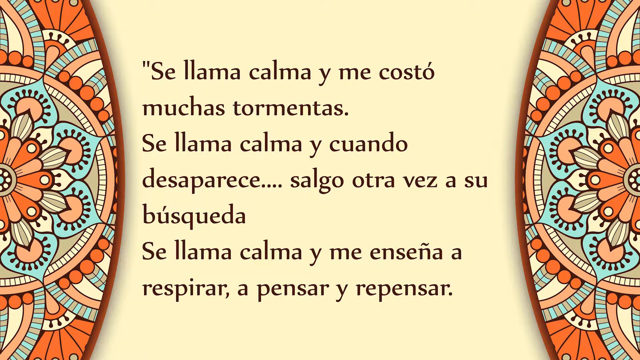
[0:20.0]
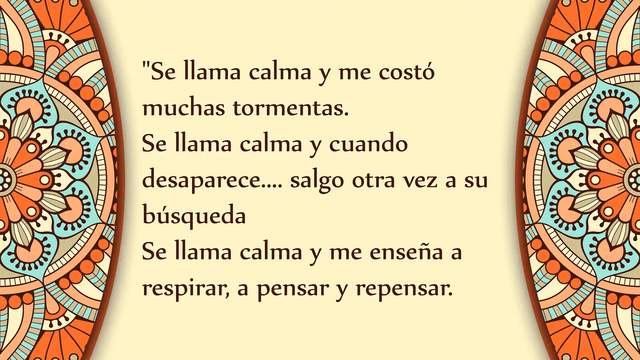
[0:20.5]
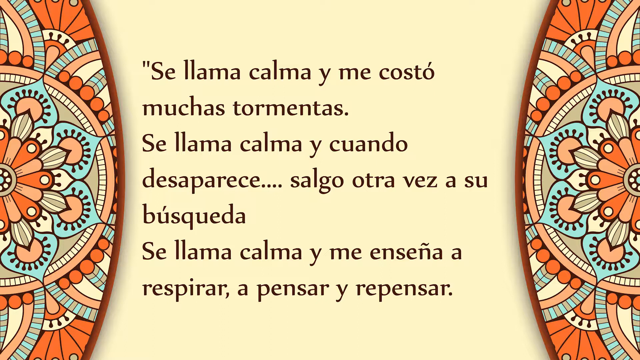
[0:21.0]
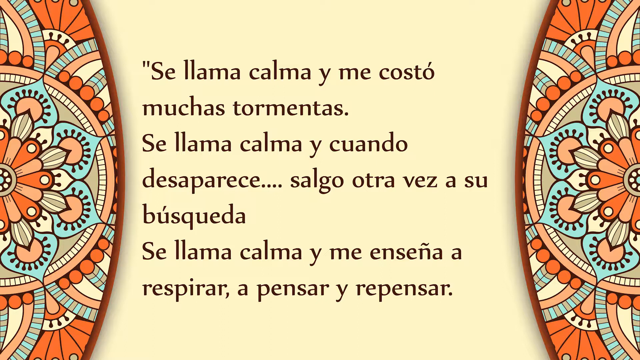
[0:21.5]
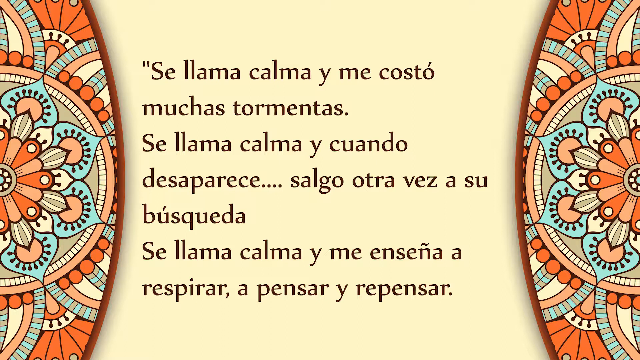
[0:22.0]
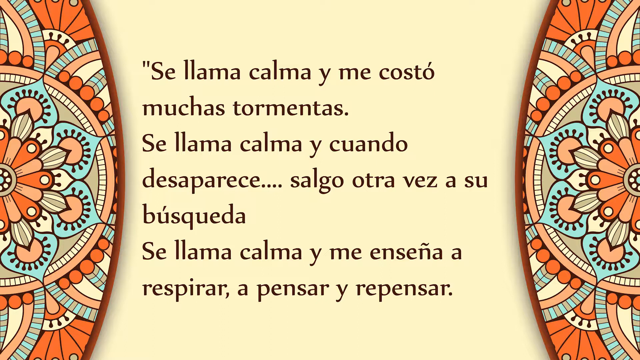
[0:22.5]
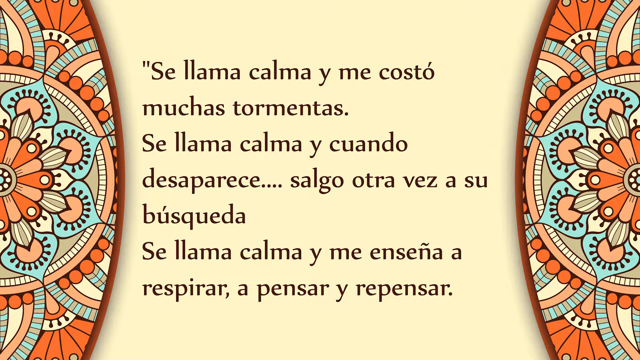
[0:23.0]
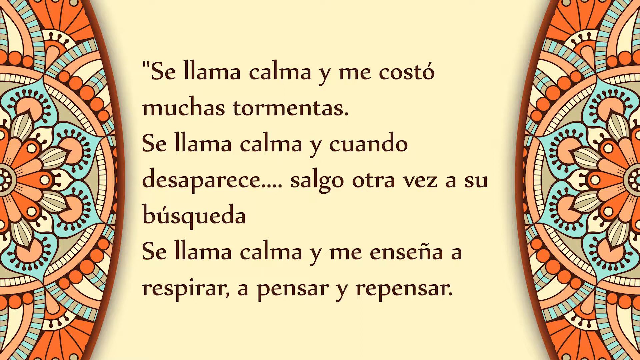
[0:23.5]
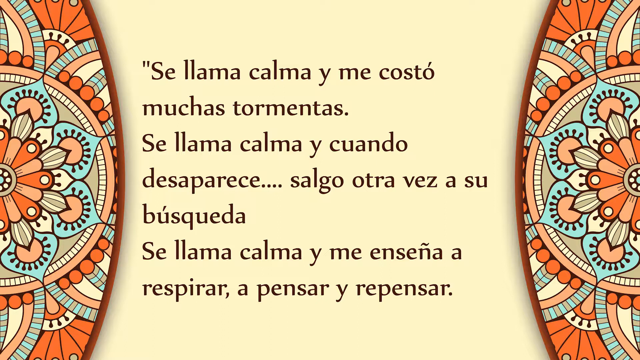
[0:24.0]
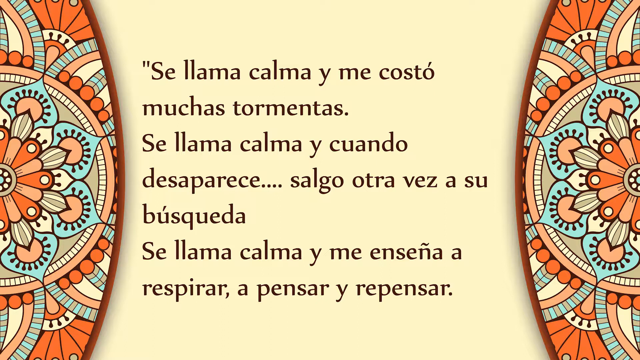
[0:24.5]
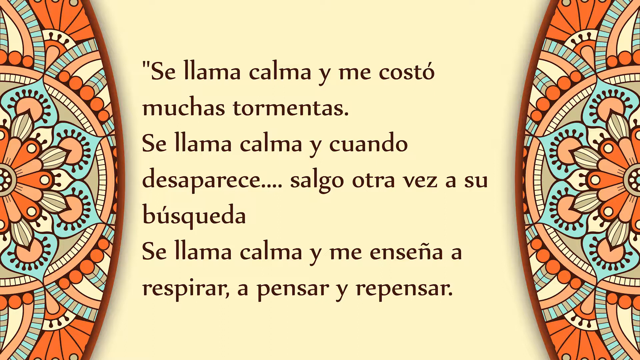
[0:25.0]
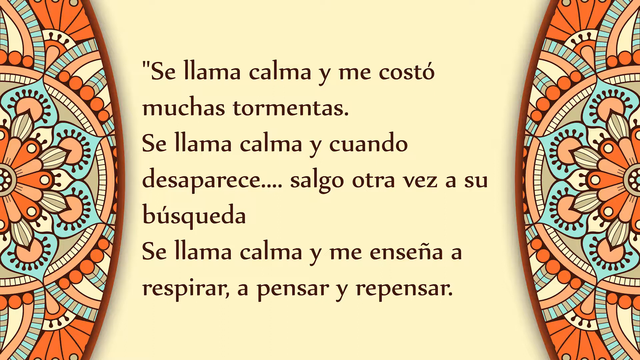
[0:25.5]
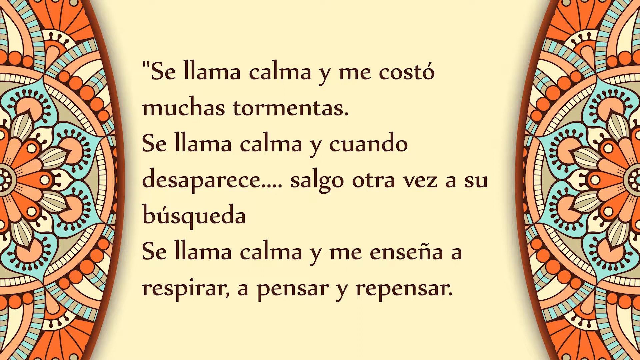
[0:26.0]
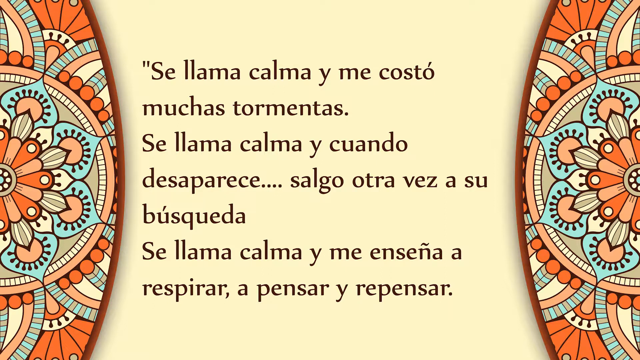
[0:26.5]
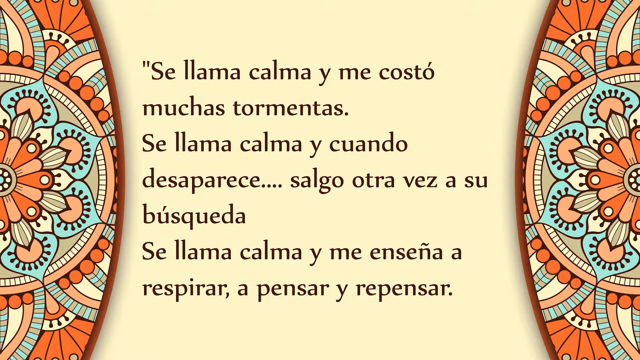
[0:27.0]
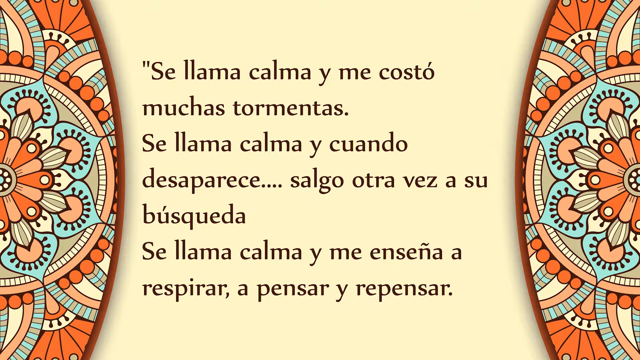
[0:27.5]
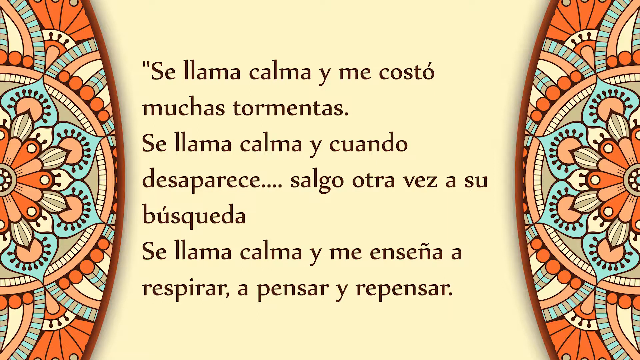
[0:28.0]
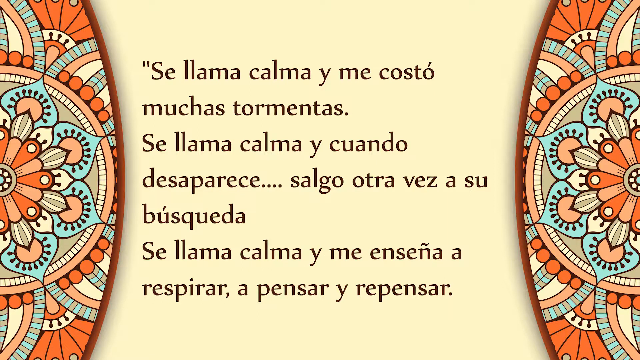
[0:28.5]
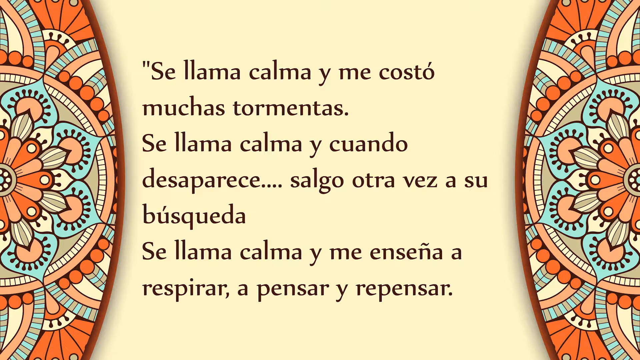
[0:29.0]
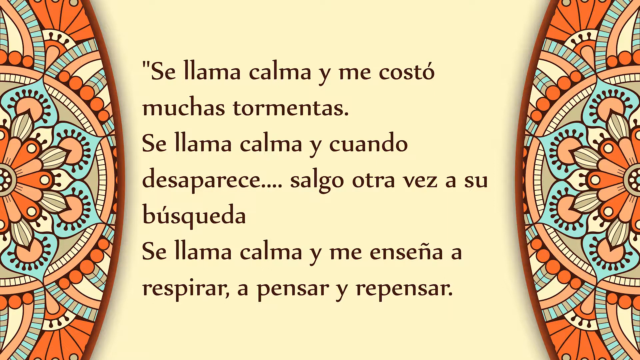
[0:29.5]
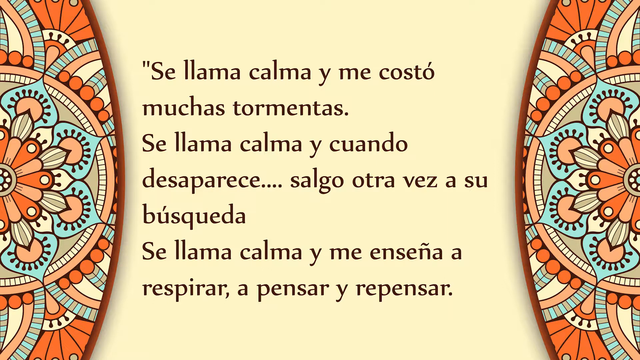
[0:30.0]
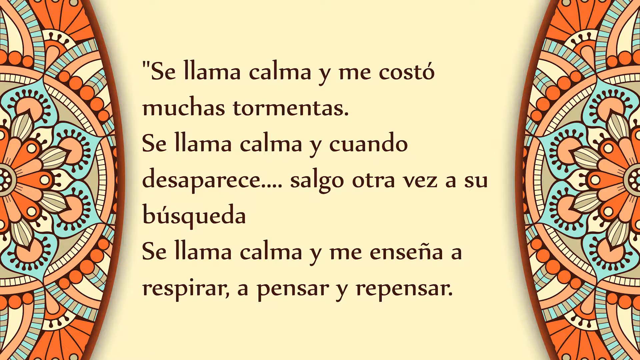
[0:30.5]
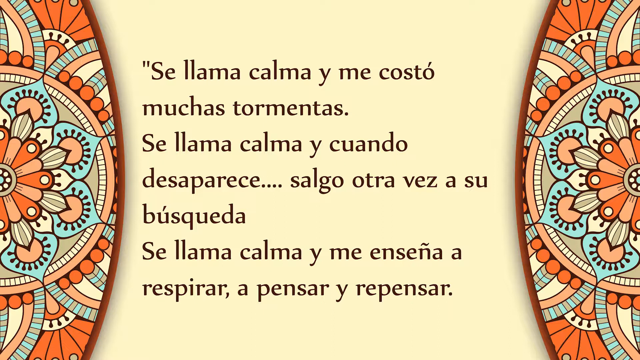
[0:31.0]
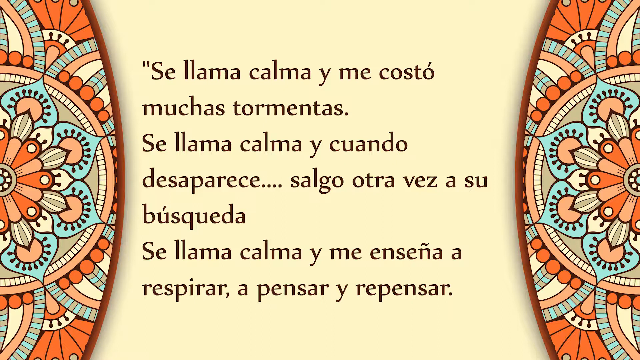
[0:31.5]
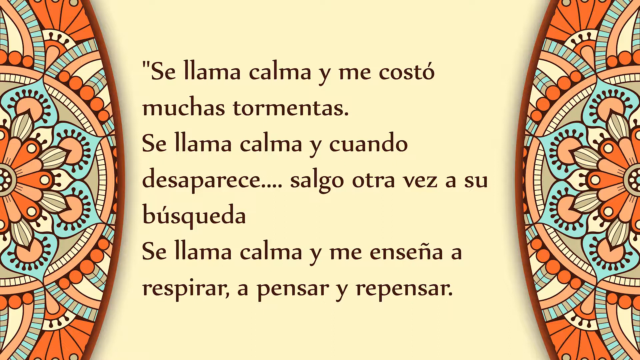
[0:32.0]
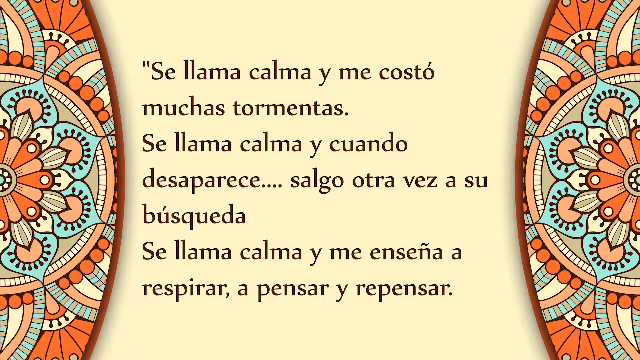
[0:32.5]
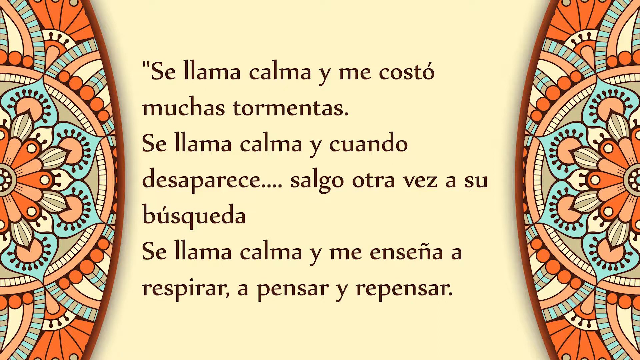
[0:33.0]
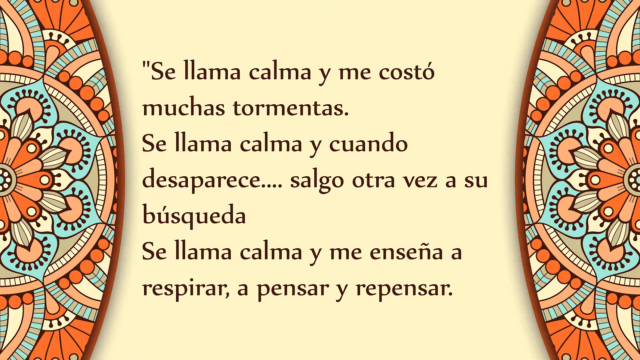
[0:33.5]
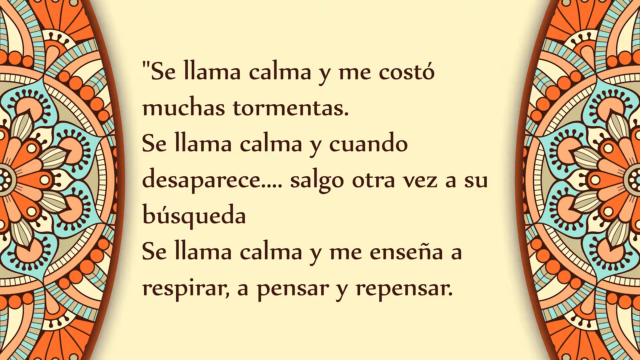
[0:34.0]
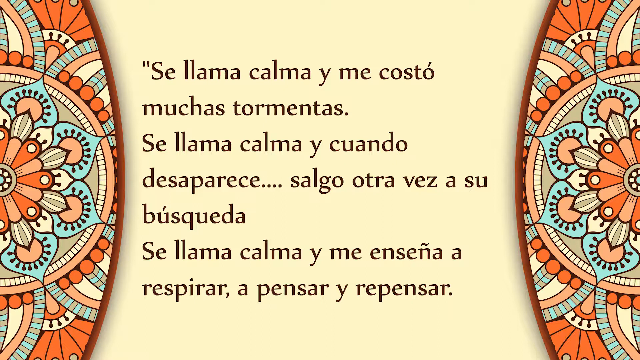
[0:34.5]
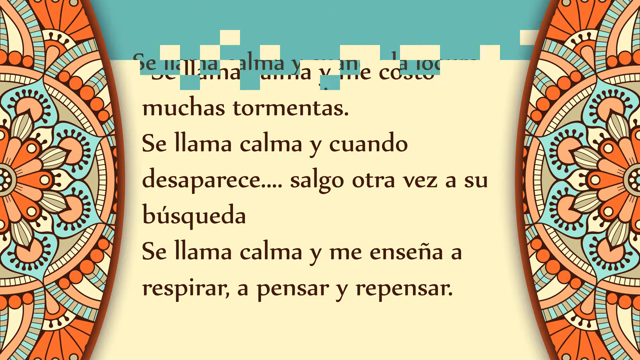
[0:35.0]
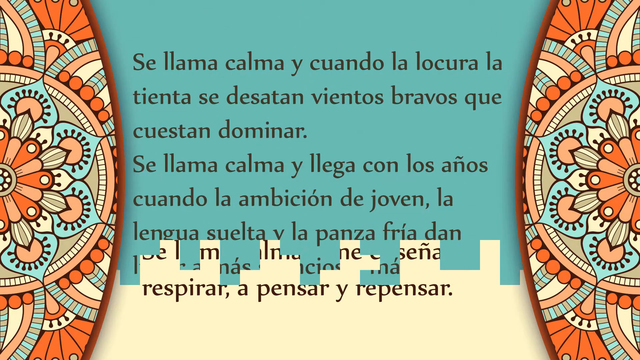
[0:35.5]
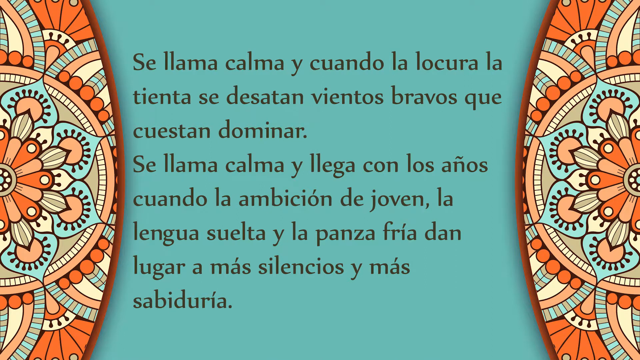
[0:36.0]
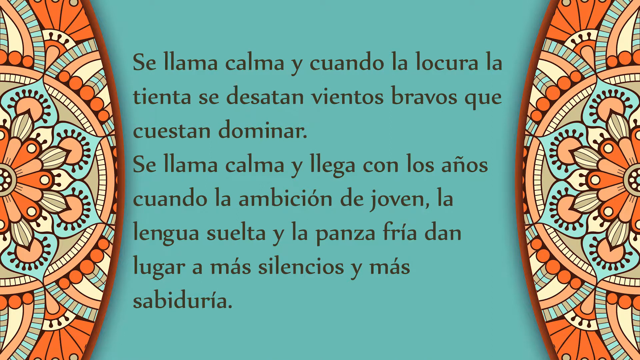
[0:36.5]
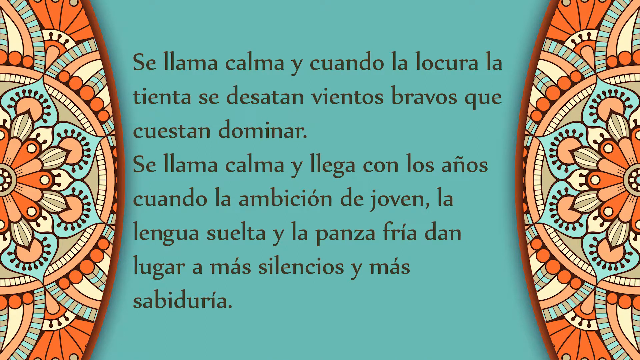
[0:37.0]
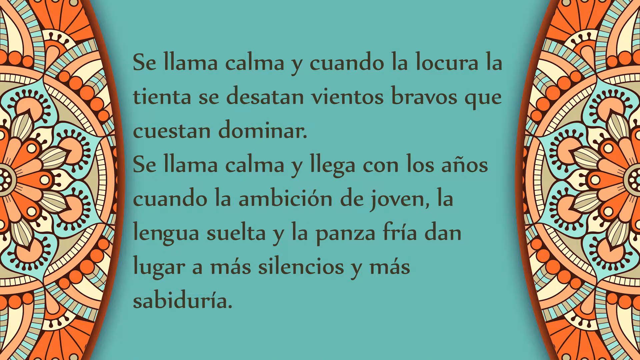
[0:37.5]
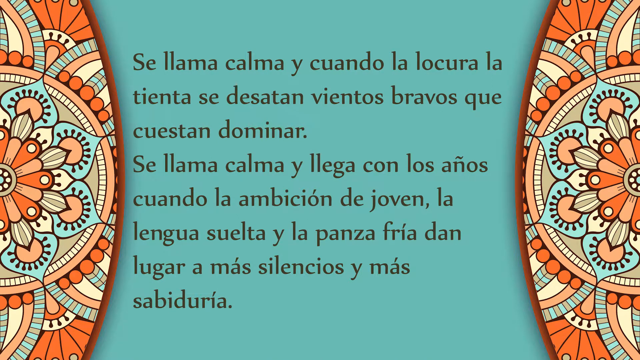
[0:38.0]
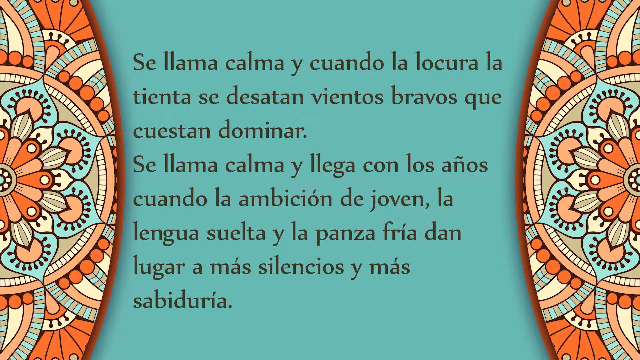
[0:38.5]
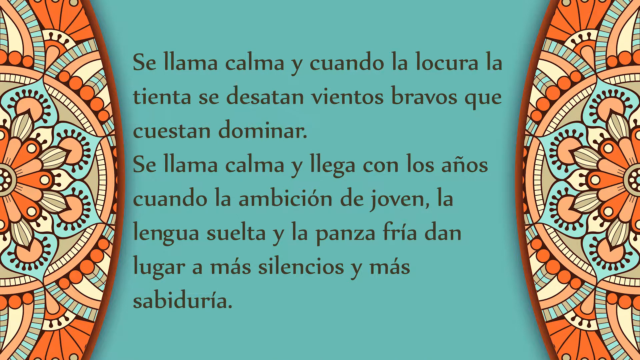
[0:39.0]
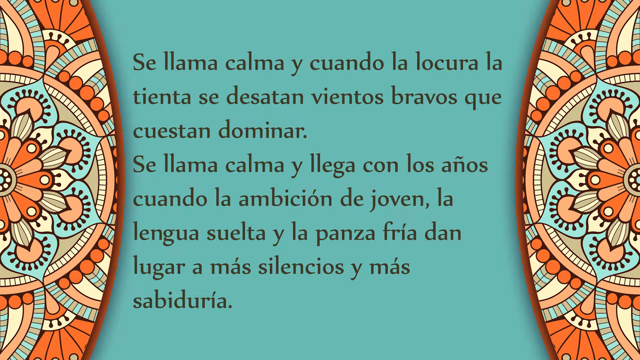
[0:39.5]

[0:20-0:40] The screen stays unchanged for several seconds; some of the words repeat. Then, starting from the top of the text section, an almost dissolving, sprinkling action occurs and the screen turns turquoise. The first three words of the new text are the same as before, and it is still in Spanish. The pattern on each side of the text stays the same: a pinwheel-type pattern in the center with petal-type shapes and many different designs and colors going outward. It is very busy and has many layers. On the edge of the circle are orange dots connected to long tubes in solid colors or stripes.